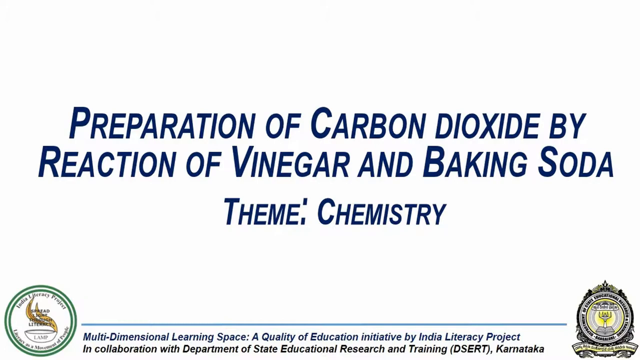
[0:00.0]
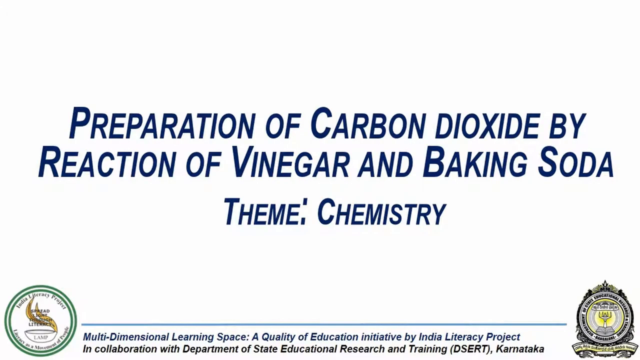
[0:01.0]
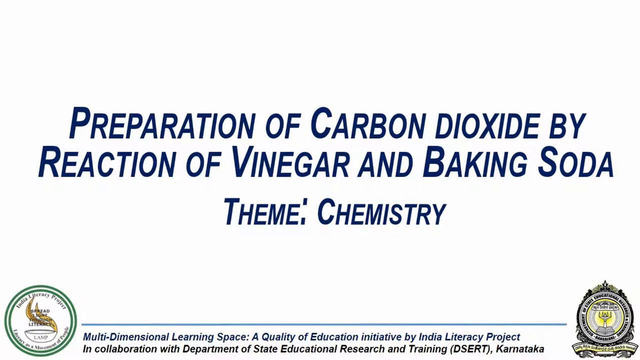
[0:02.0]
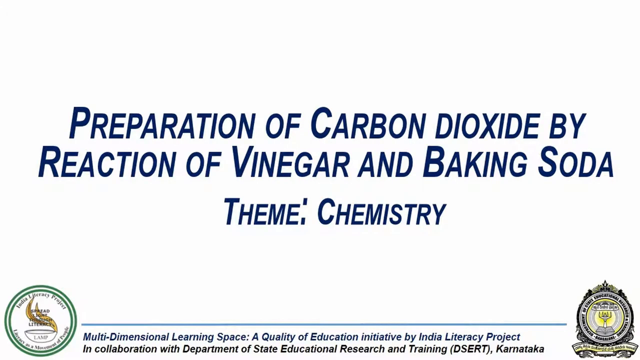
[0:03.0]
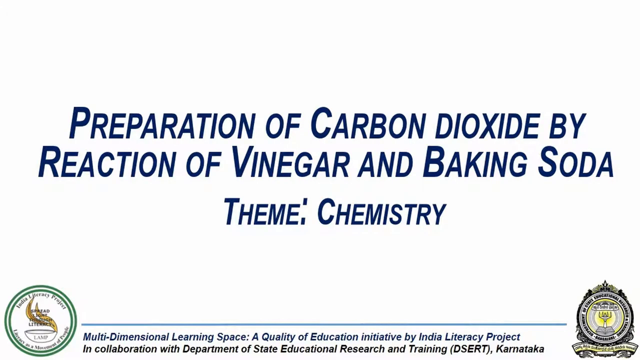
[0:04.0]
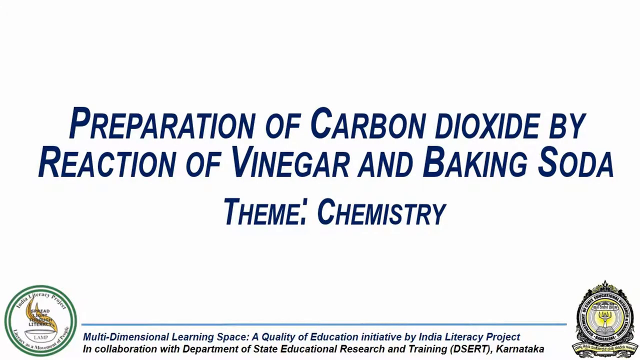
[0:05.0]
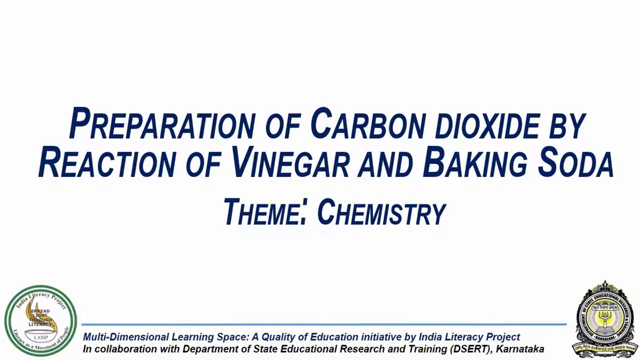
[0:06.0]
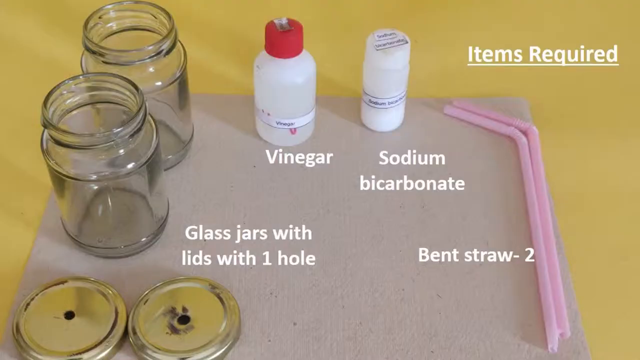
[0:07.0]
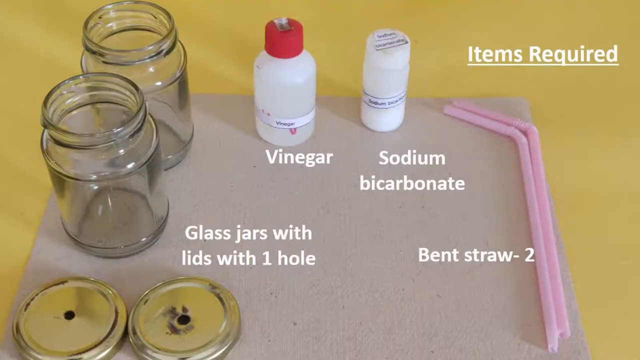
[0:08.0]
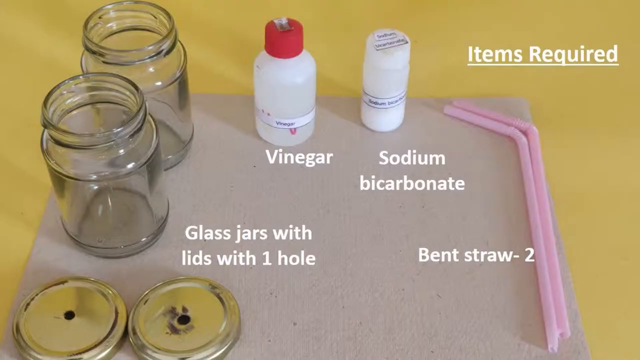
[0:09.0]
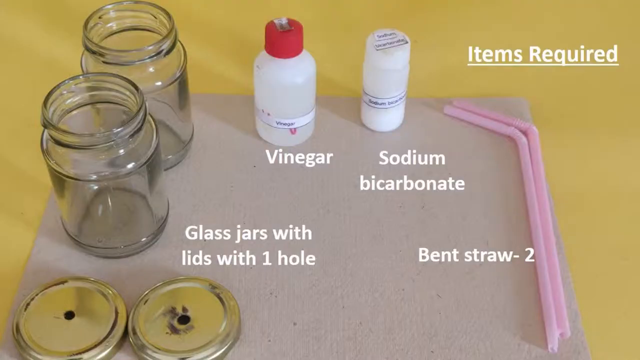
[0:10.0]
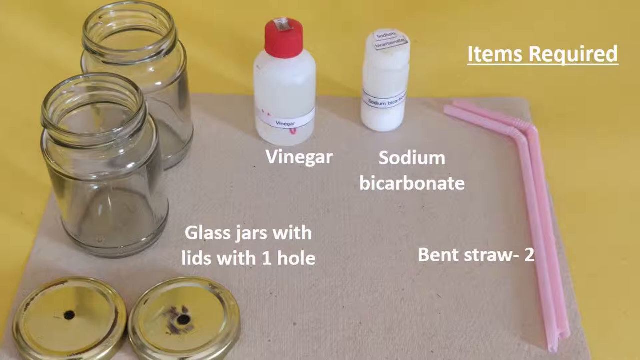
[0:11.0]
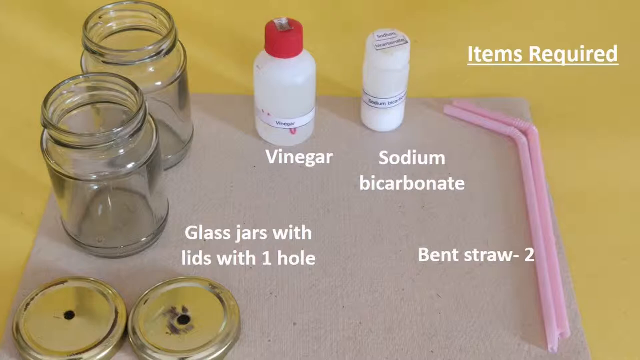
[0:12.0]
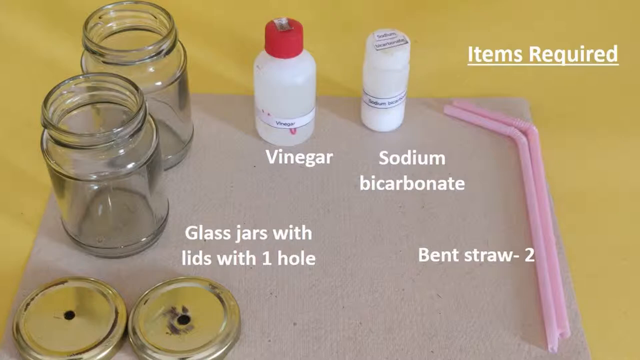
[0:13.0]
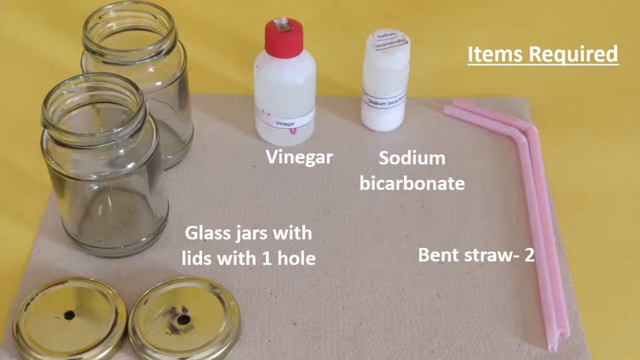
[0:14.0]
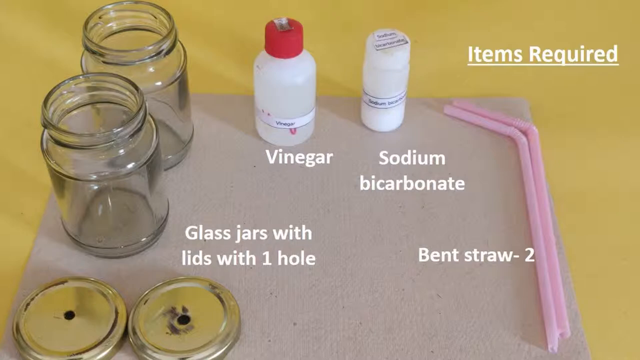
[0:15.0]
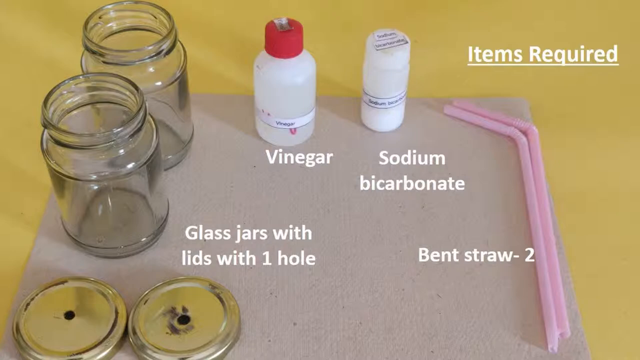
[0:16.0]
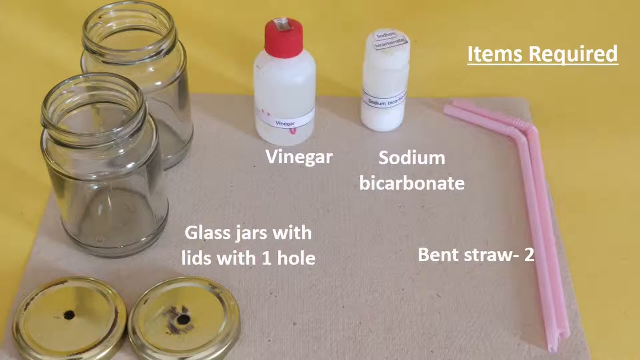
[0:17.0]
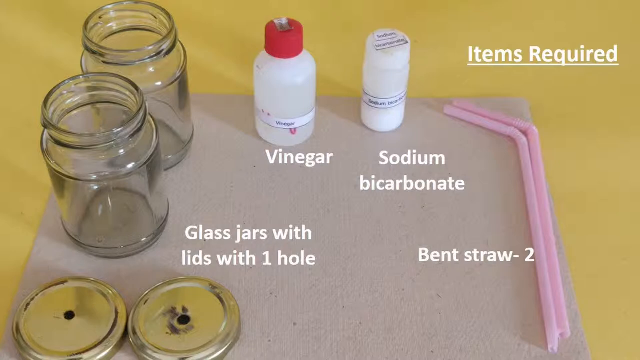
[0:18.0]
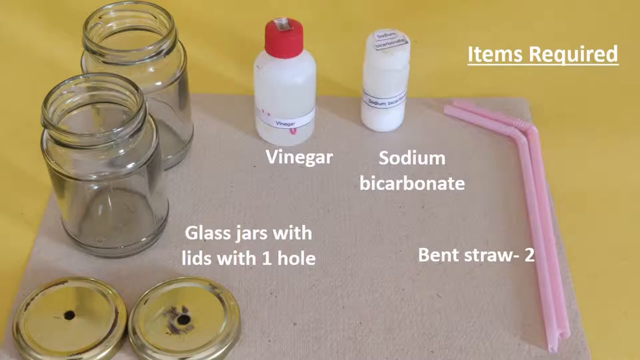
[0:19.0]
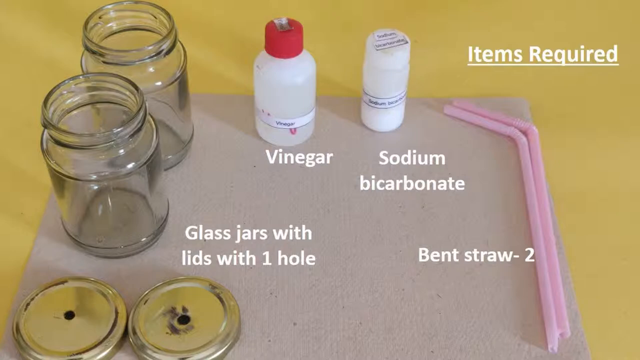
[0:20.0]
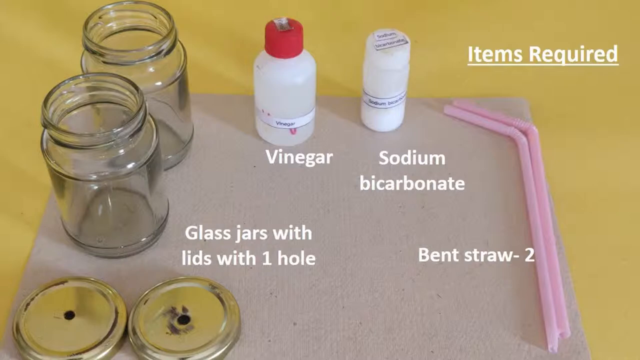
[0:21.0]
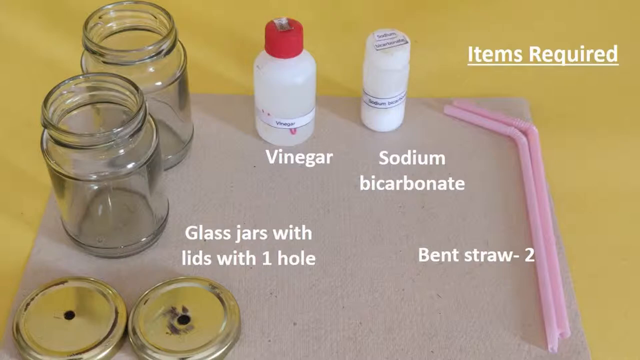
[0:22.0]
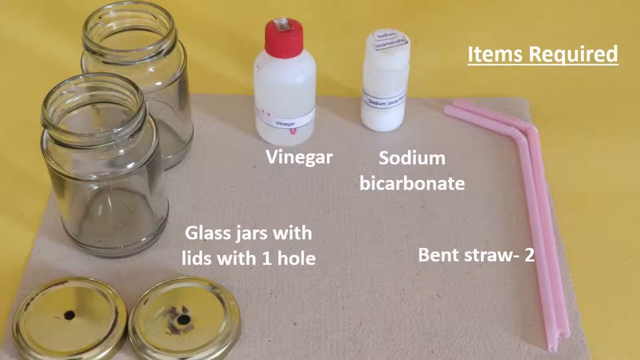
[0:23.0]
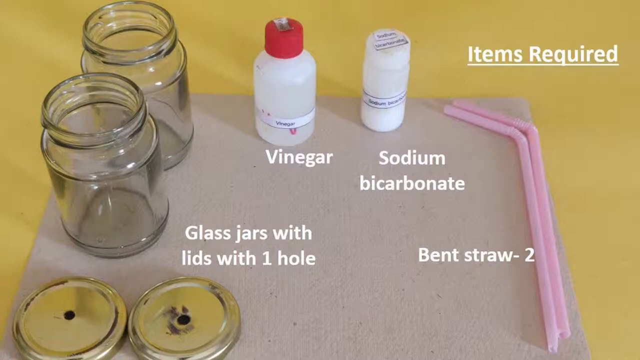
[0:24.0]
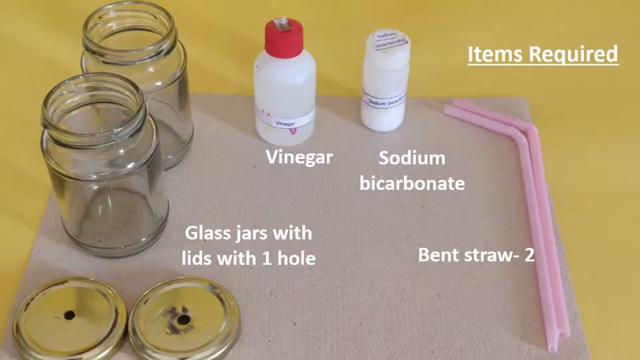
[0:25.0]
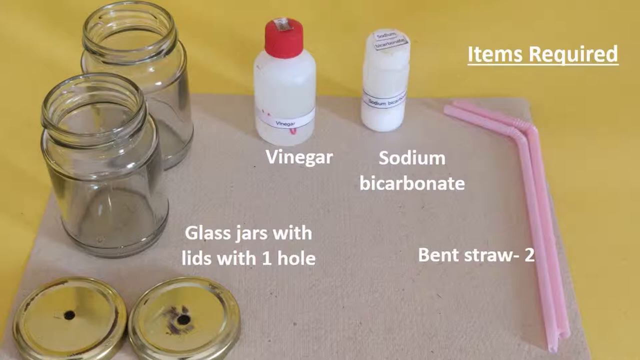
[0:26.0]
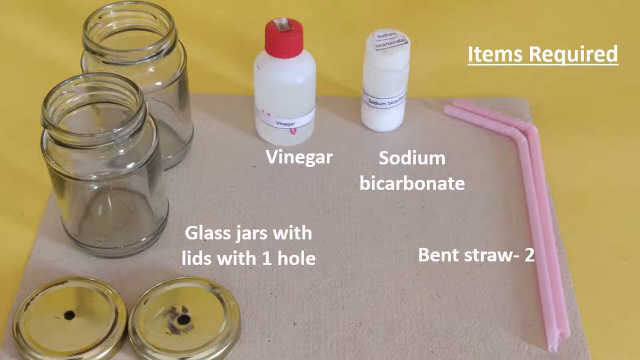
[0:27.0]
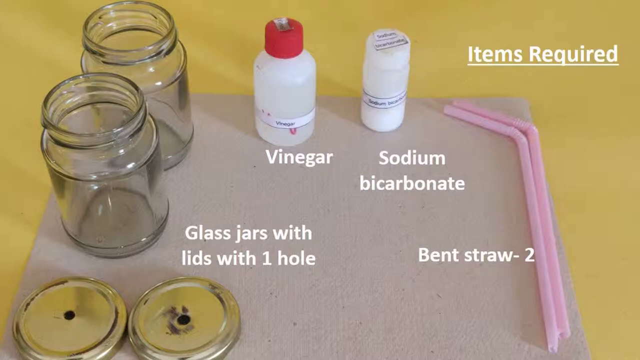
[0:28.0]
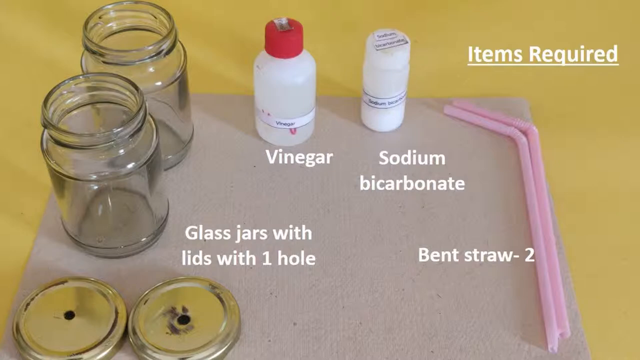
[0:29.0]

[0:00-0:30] The video opens on a white screen with the title "preparation of carbon dioxide by reaction of vinegar and baking soda" and "theme chemistry". At the bottom of the page, text reads "multi-dimensional learning" followed by "initiative by India Literacy Project in collaboration with the department of state educational research training". Two logos appear on the sides of the screen. The video then switches to a picture of a desk labeled "items required": two mason jars, glass jars with lids that each have one hole, a bottle of vinegar, a bottle of sodium bicarbonate and two plastic pink straws, apparently the items needed for an experiment collecting carbon dioxide from a sodium bicarbonate and vinegar mixture.